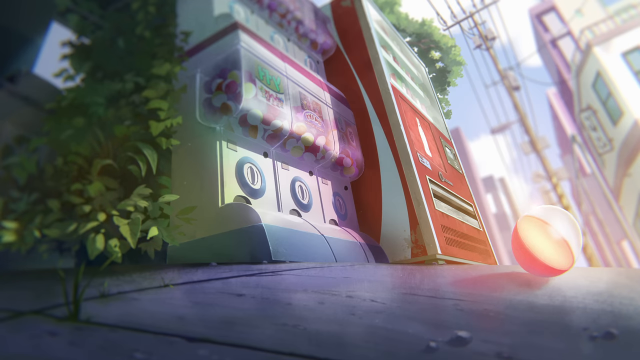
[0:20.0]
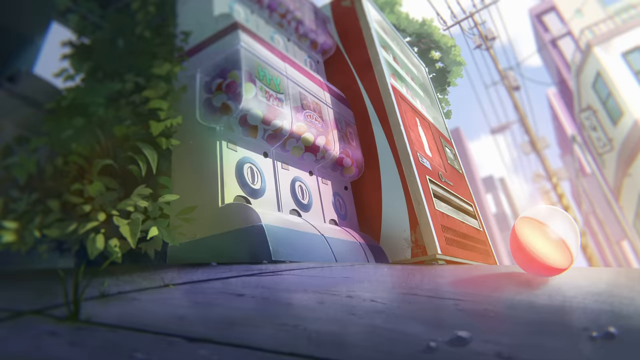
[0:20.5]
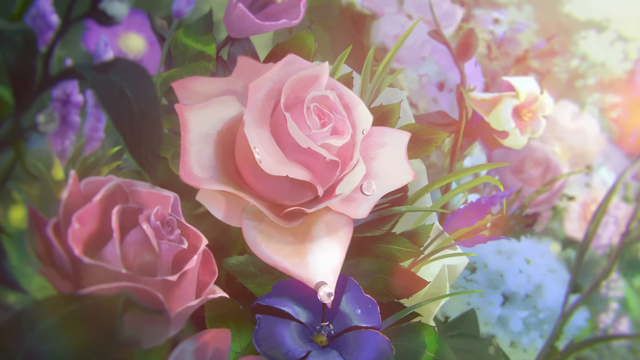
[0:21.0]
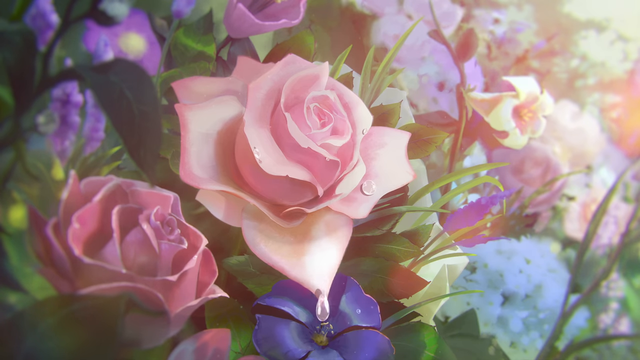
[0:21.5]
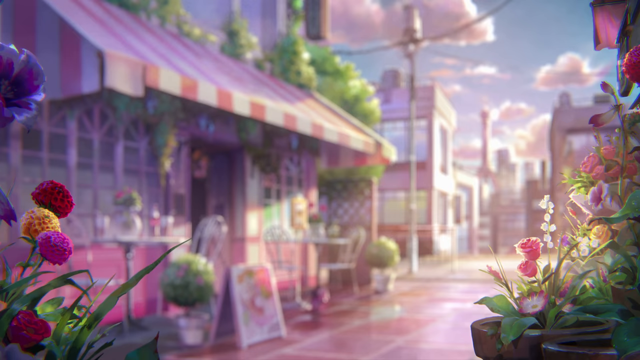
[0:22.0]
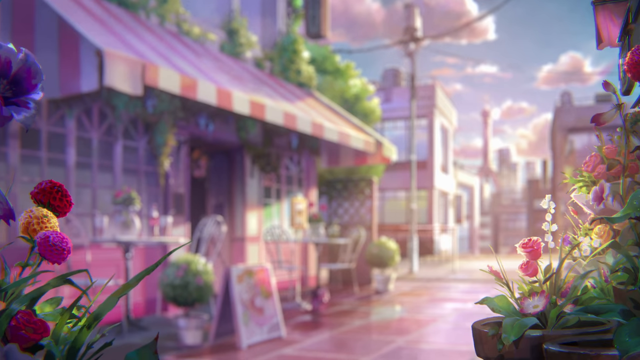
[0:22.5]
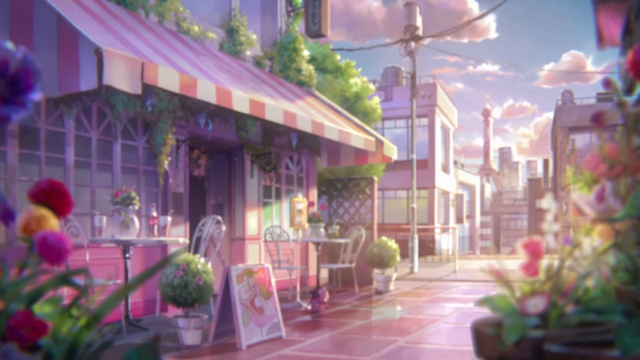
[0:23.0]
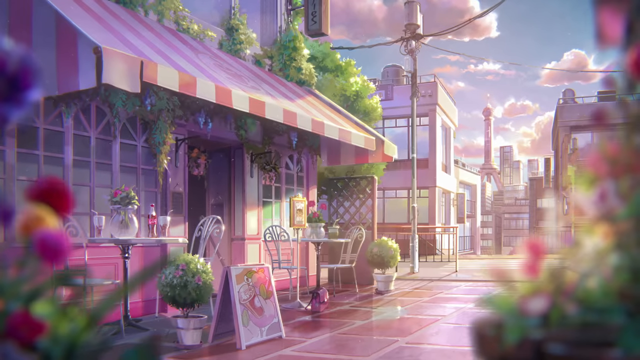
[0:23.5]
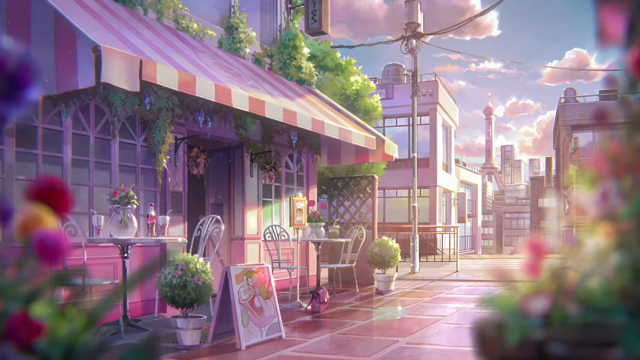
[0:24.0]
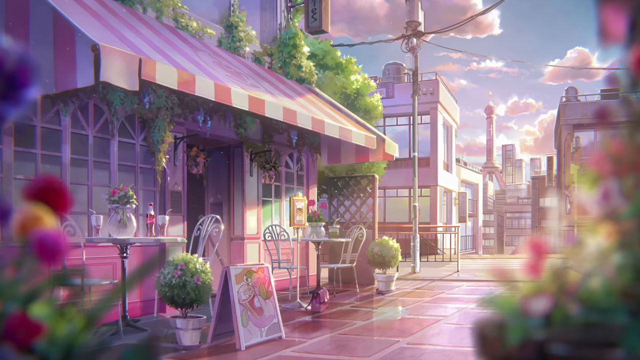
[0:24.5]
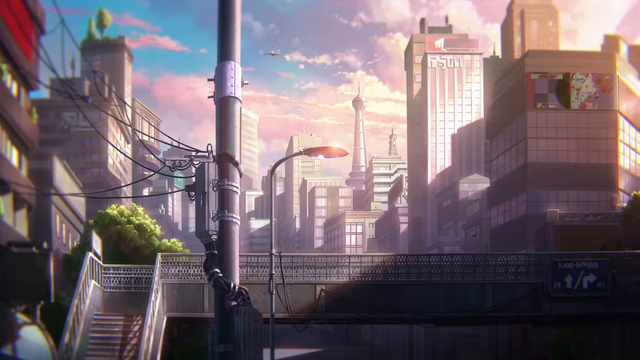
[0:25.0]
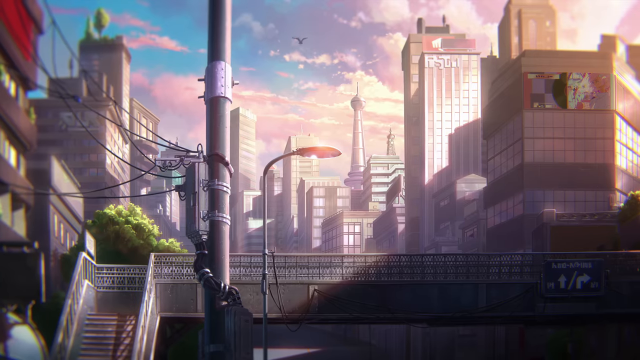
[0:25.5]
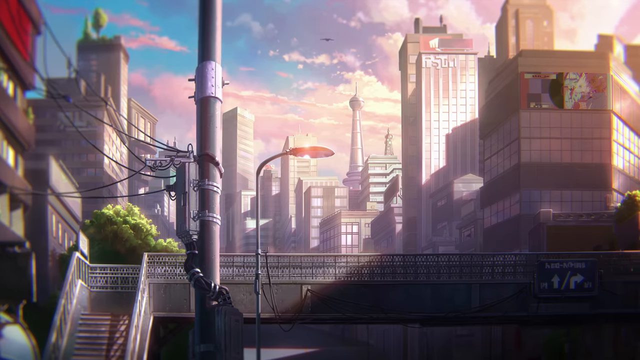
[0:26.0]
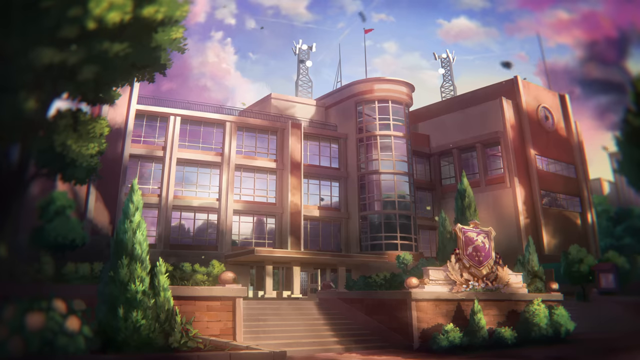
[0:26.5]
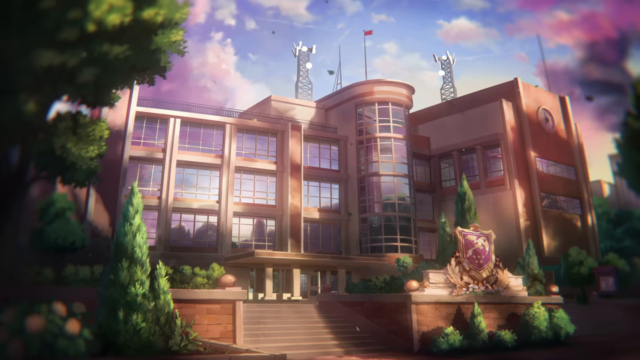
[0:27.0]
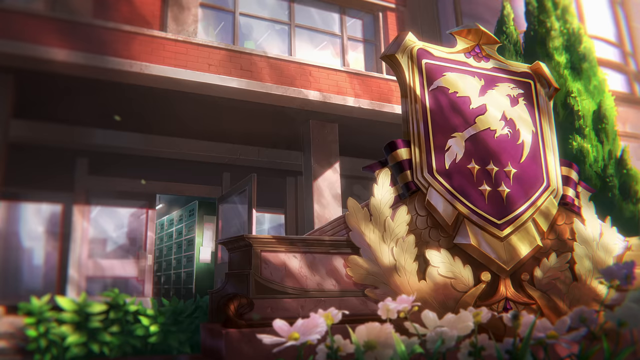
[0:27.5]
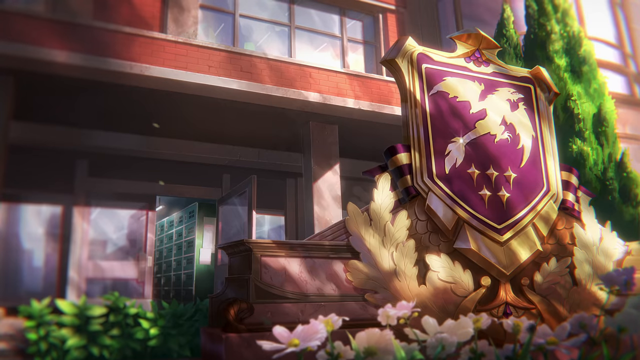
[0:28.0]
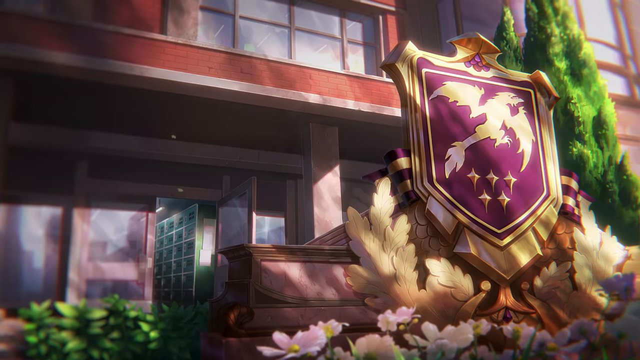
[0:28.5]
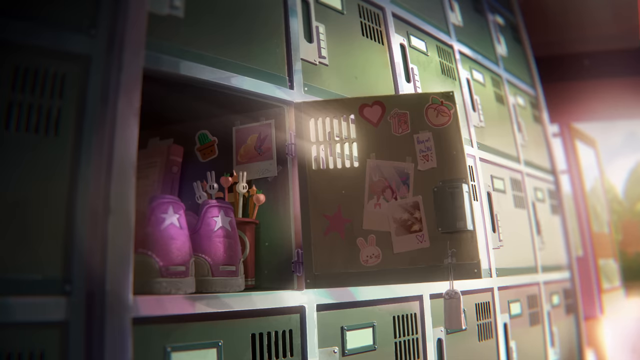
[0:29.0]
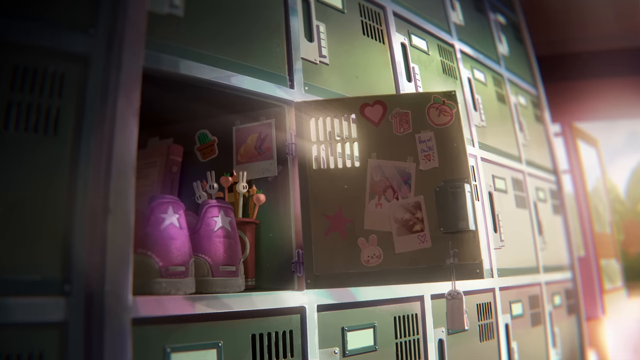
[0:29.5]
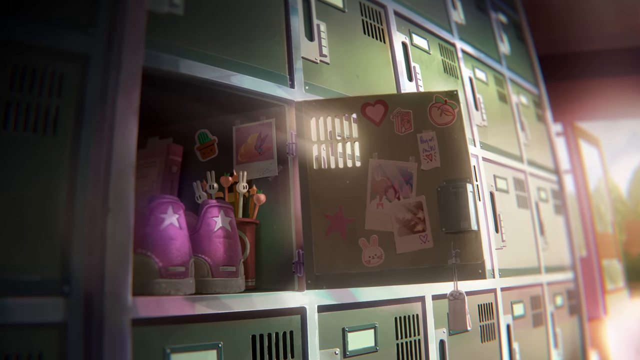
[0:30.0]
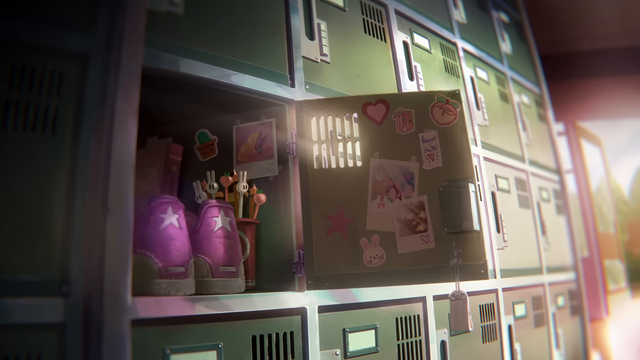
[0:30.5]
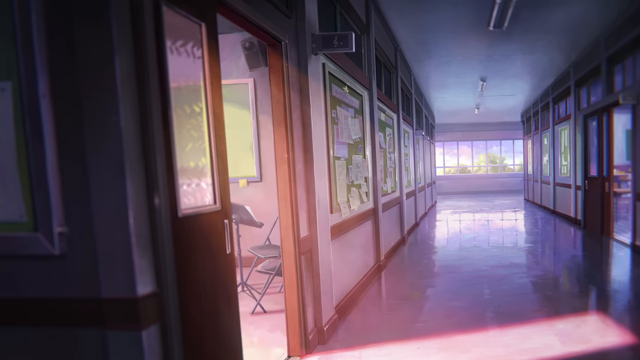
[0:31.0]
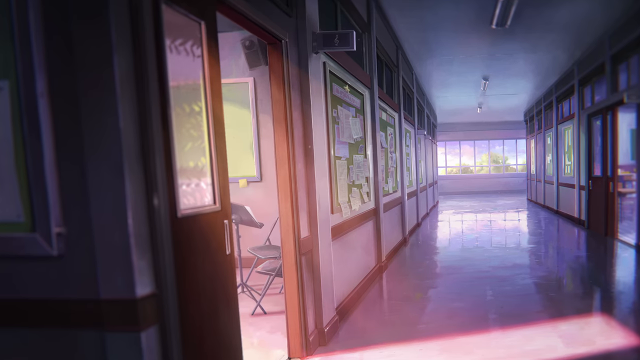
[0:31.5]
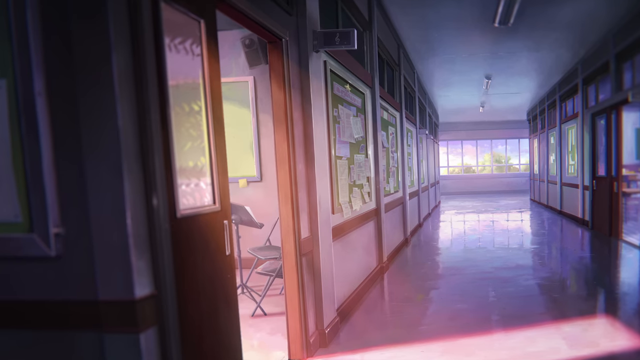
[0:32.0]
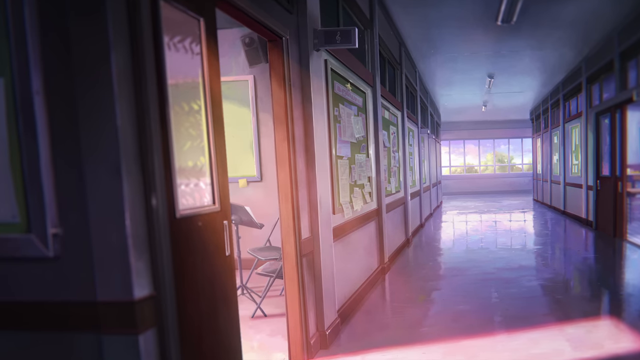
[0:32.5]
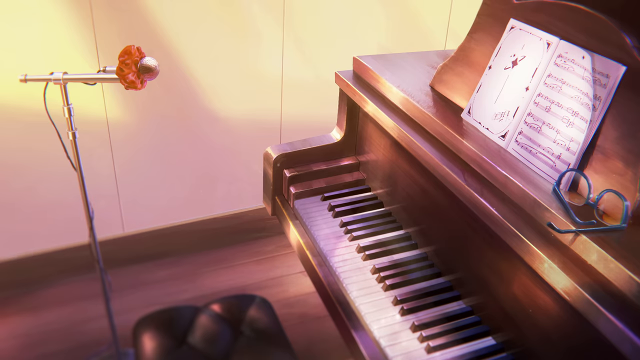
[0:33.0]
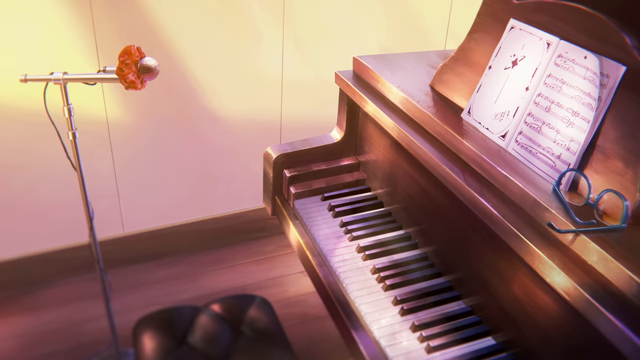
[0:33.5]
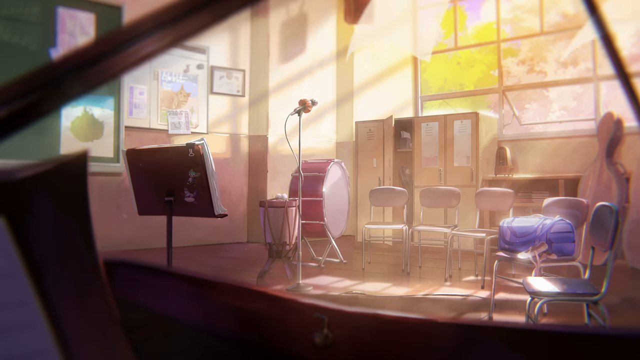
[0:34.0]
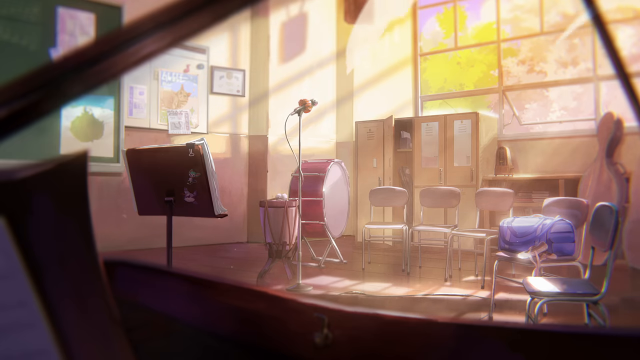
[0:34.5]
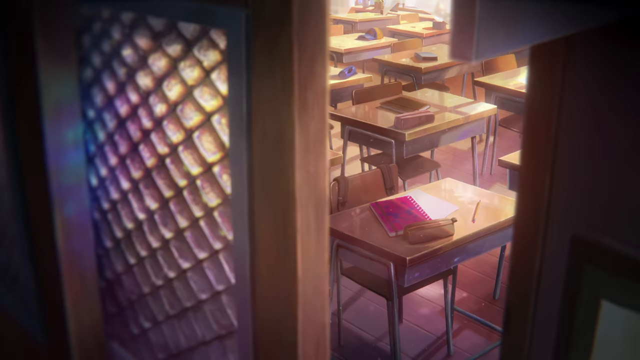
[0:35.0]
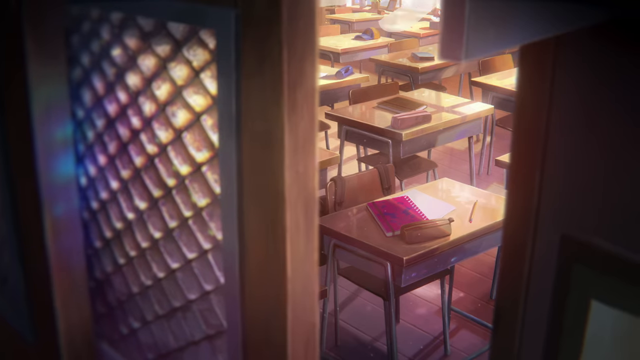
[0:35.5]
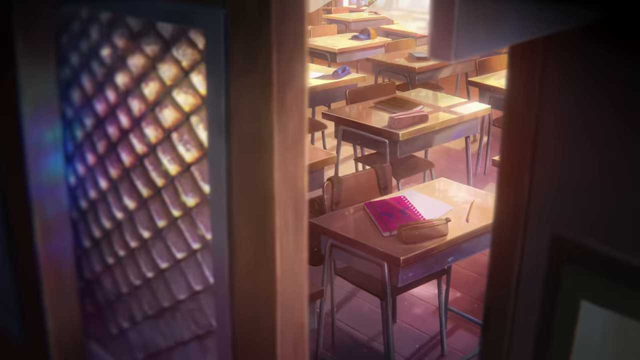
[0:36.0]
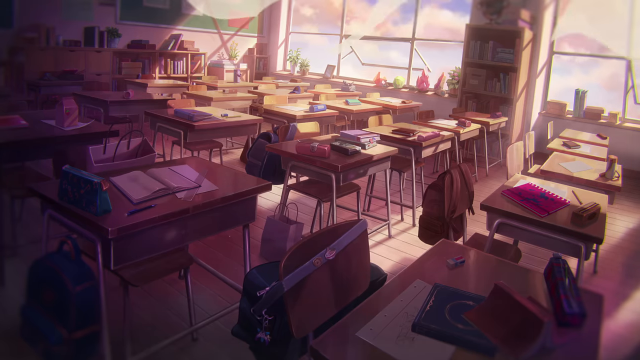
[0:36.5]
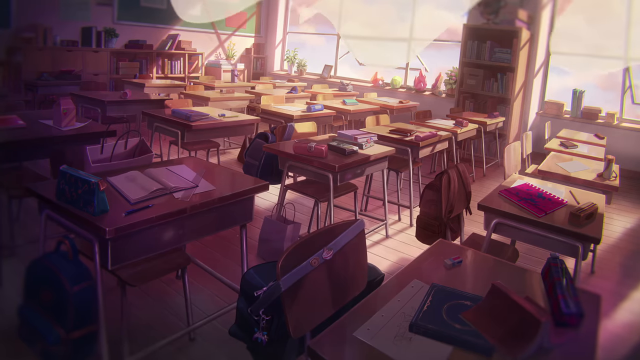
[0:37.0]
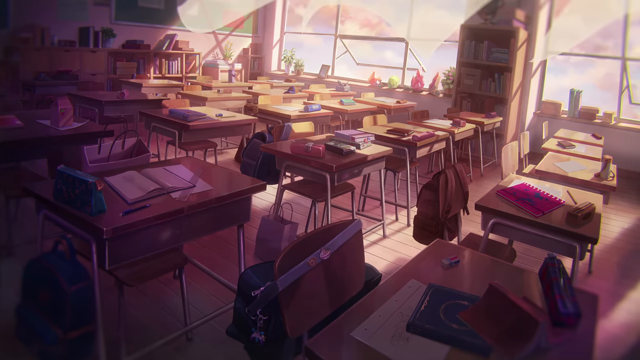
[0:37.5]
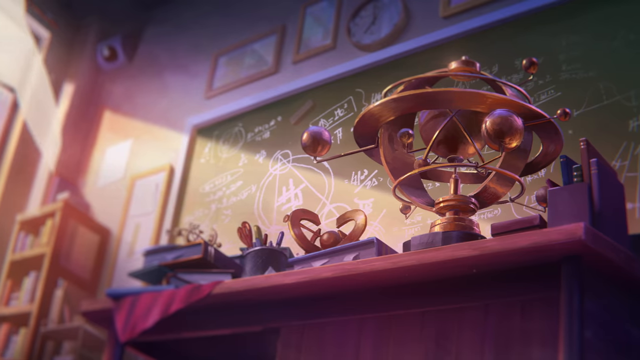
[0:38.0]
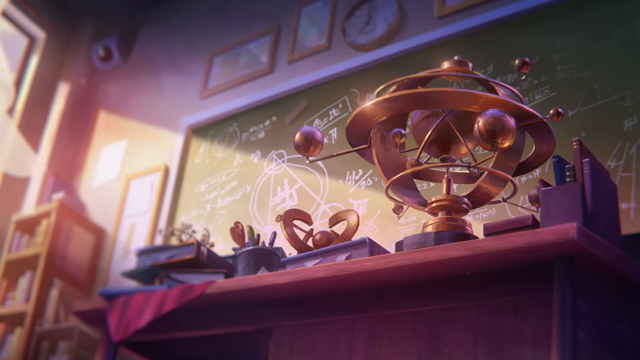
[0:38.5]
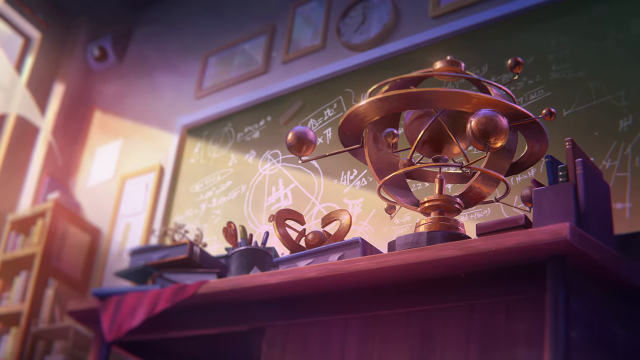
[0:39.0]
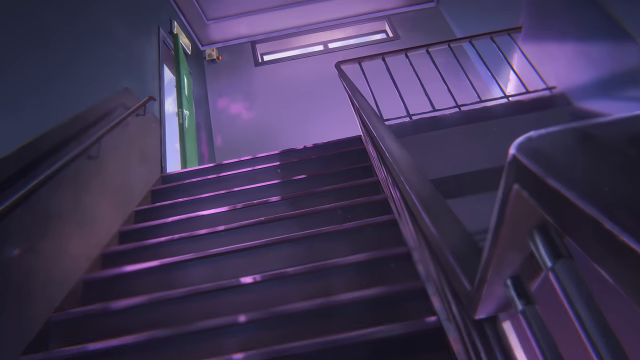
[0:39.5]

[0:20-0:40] Different parts of the game continue to be shown: the outside of buildings and the inside of what looks like it might be a school. There appear to be green lockers, one of them open with pink shoes inside. Multiple desks in a classroom are shown, seemingly from the doorway, with a pink notebook on the desks. The teacher's desk has some type of contraption on it. The inside of the school is mostly pastel colors, with light brown desks, and looks very calm and serene. A shot that looks like it is walking upstairs is a little darker than the rest, but the colors are mostly calm and comforting. There is also what looks like a music room with drums and a piano, with a more close-up shot of the brown piano.